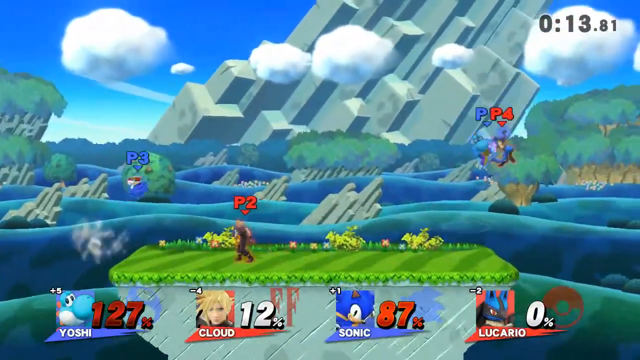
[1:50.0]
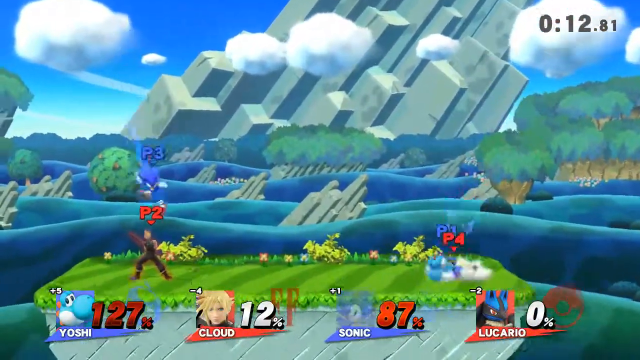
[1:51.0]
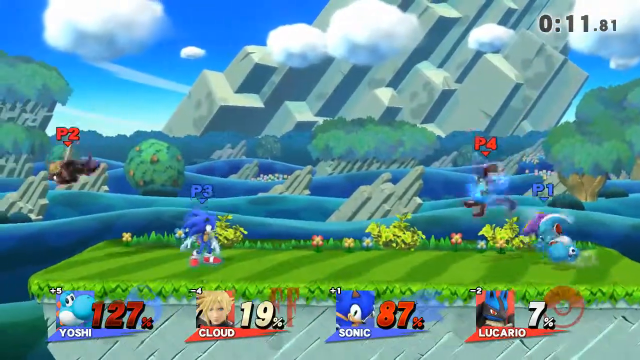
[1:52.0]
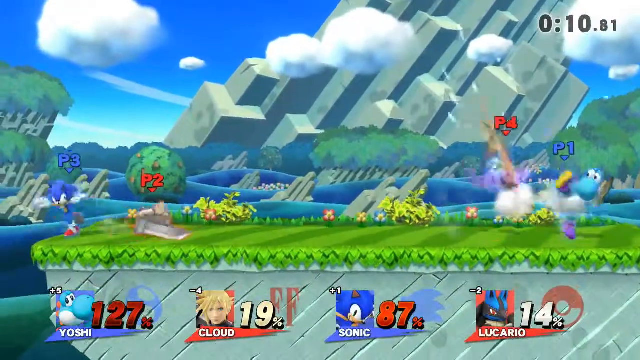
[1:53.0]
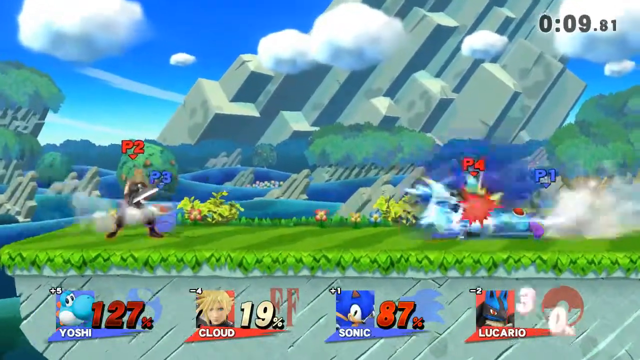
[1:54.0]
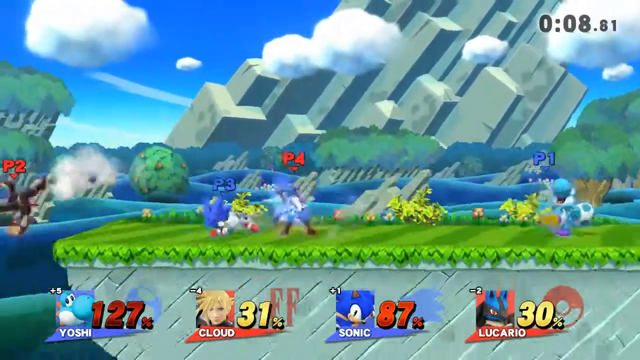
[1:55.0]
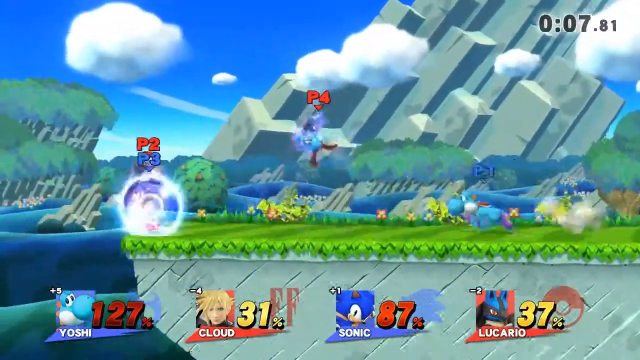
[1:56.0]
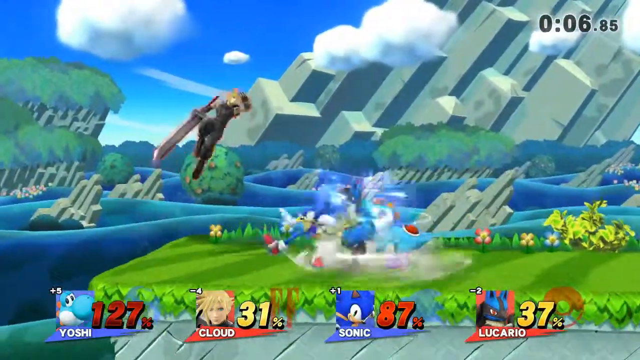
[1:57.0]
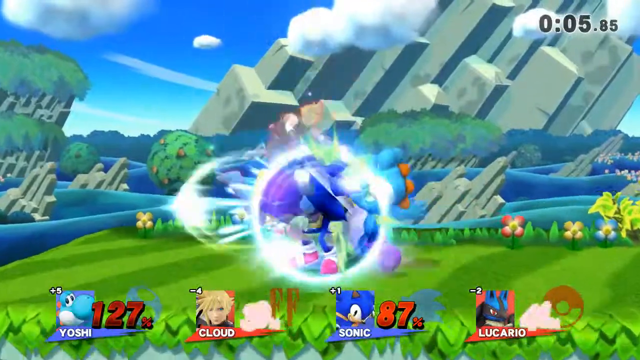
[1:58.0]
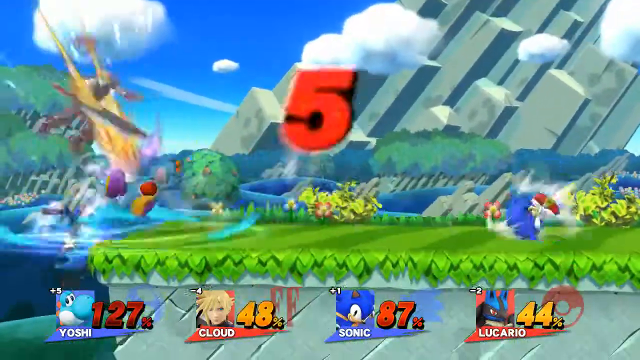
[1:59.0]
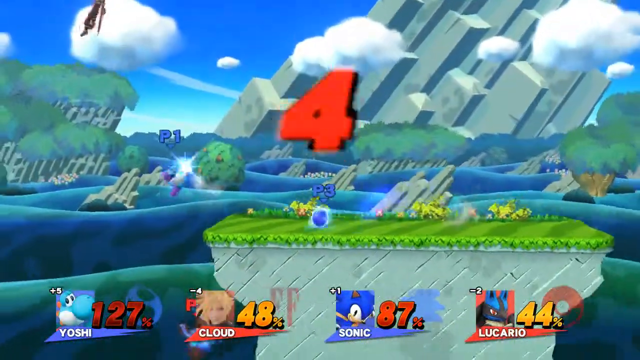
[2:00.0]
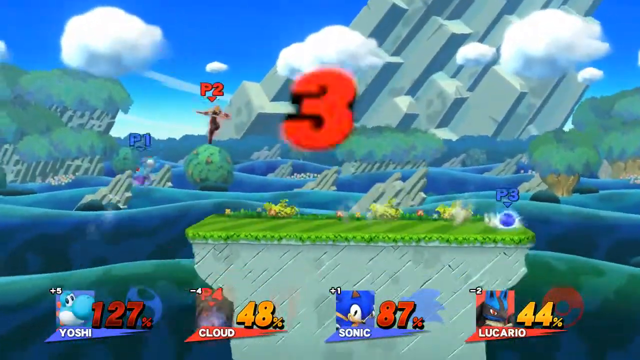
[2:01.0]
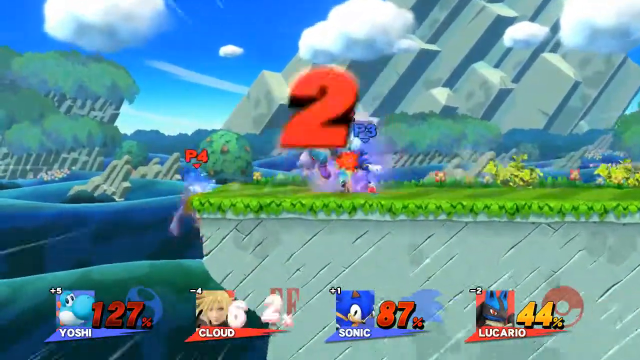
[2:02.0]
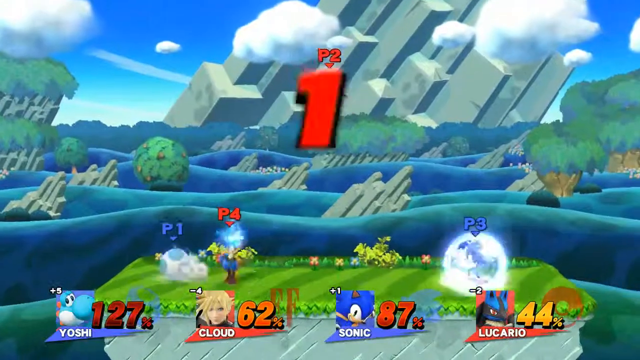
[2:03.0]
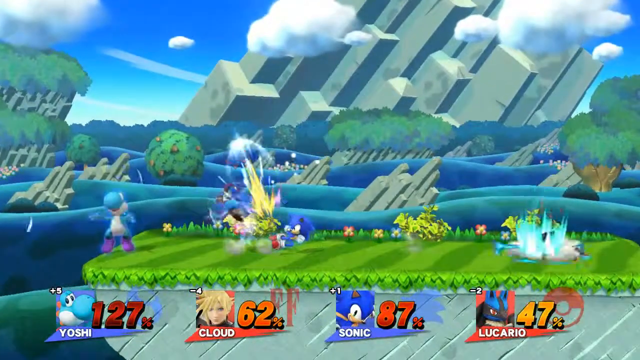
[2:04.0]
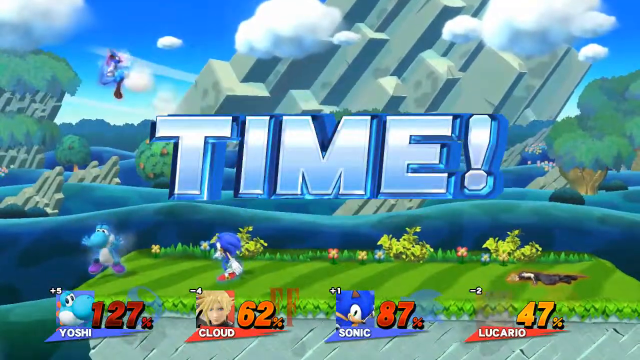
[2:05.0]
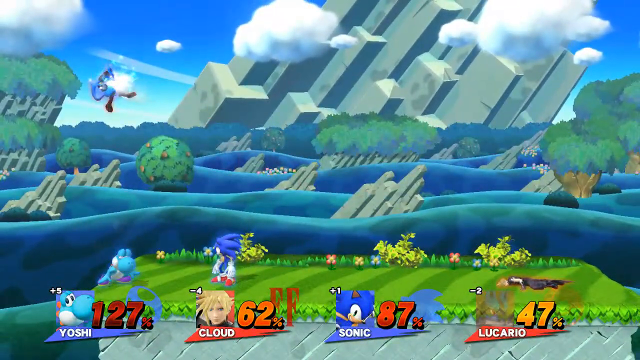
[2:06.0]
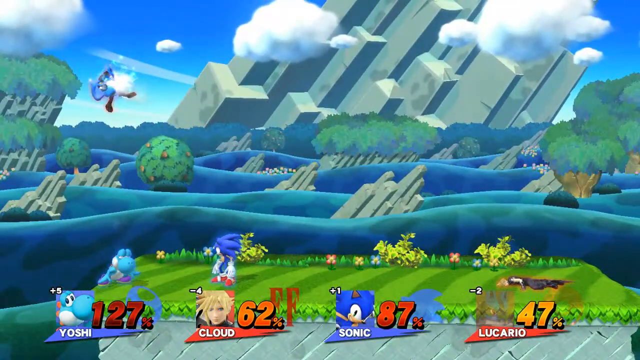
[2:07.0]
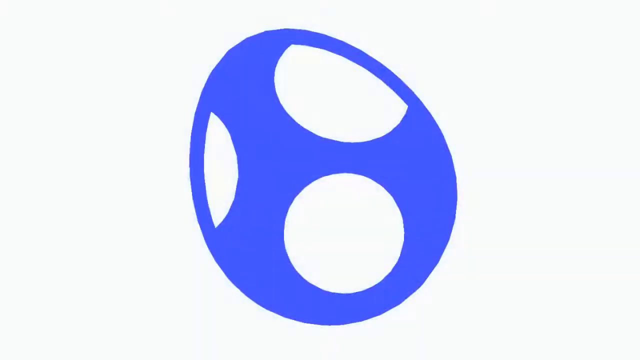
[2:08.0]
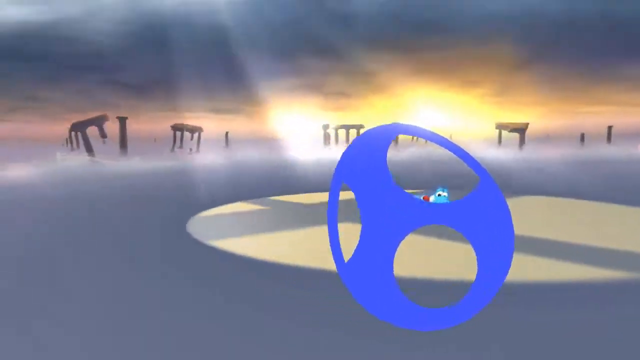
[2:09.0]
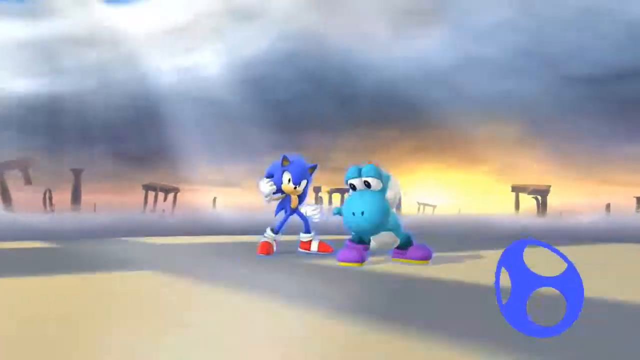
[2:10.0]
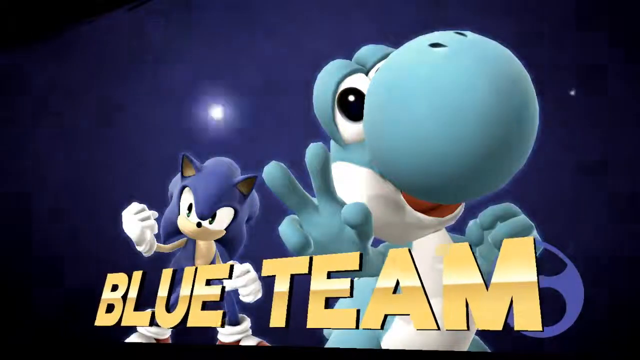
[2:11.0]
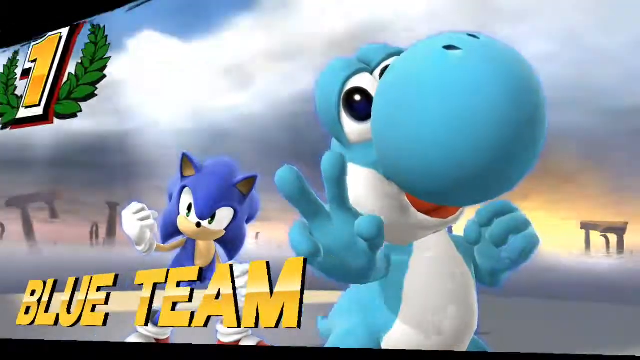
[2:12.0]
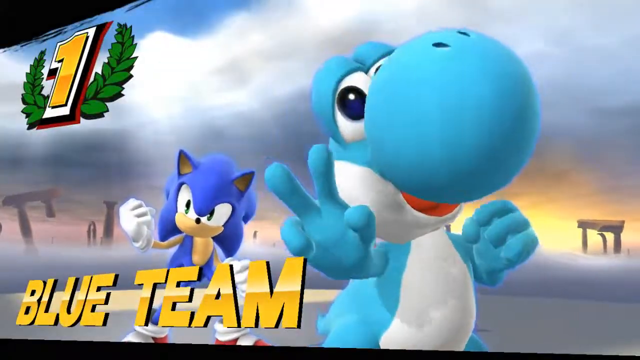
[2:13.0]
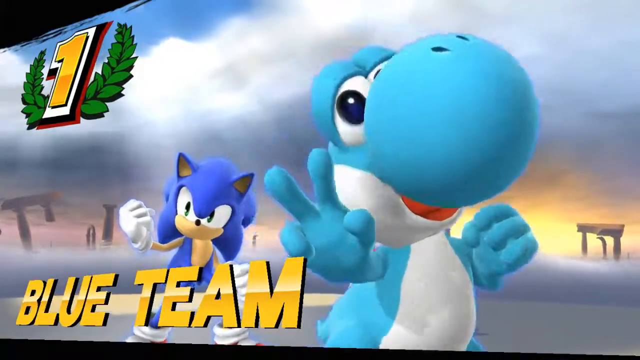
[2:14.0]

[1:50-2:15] With 13 seconds, almost 14, remaining, Yoshi is at 127%, Cloud at 12%, Sonic at 87%, and Lucario at 0%. The fighting continues, and the red team almost gets a double knockoff of the blue team before time is called with "3, 2, 1, time." A winning scene shows the blue team as number 1, with Yoshi at the front and Sonic at the back on the left-hand side. The final scores are 127% for Yoshi, 87% for Sonic, 62% for Cloud, and 47% for Lucario, giving the blue team 214% and the red team 109% damage. The red team never knocks off a blue team member.